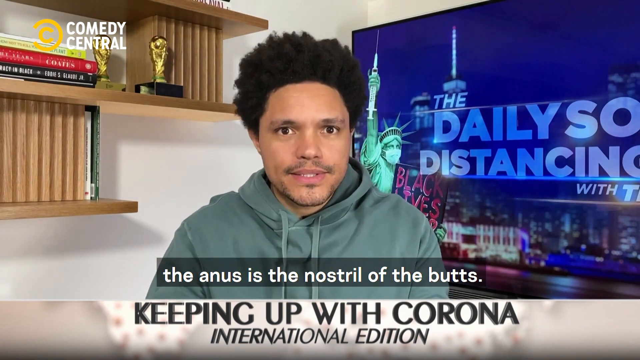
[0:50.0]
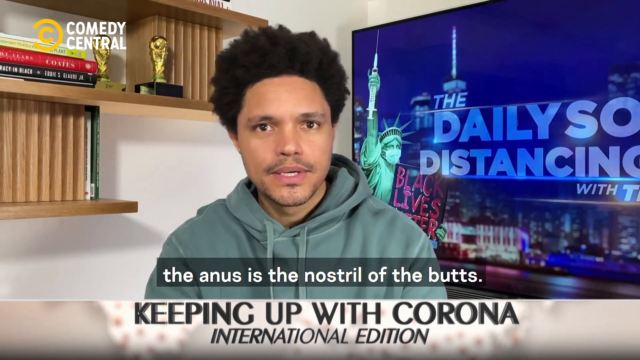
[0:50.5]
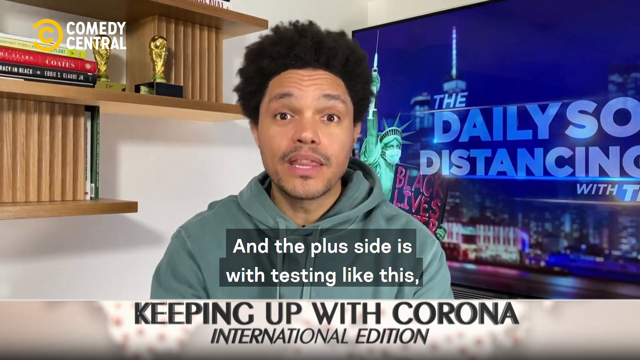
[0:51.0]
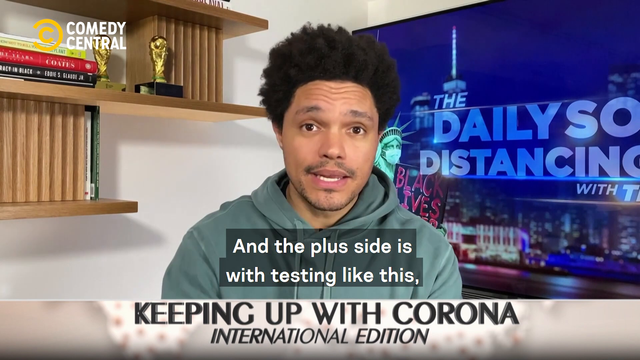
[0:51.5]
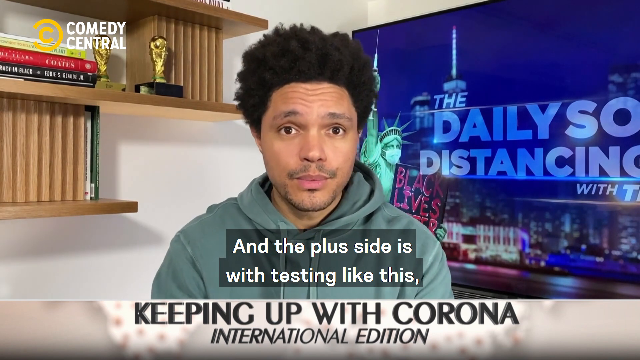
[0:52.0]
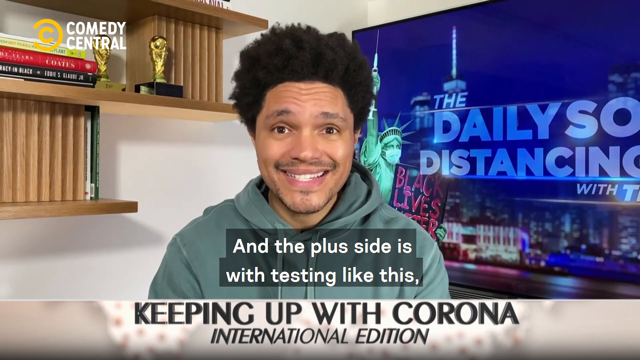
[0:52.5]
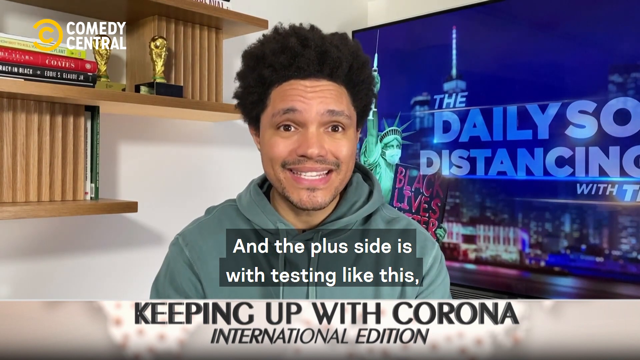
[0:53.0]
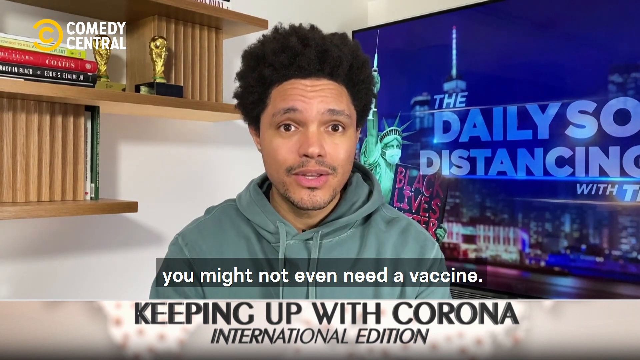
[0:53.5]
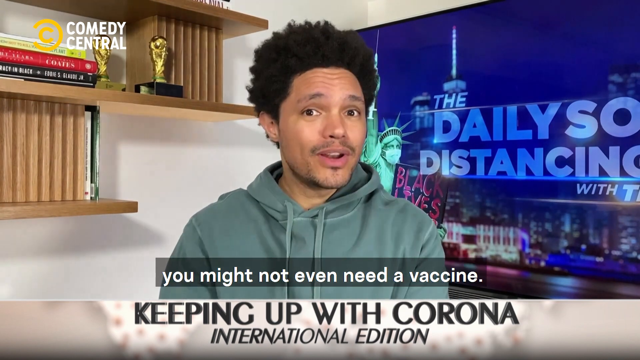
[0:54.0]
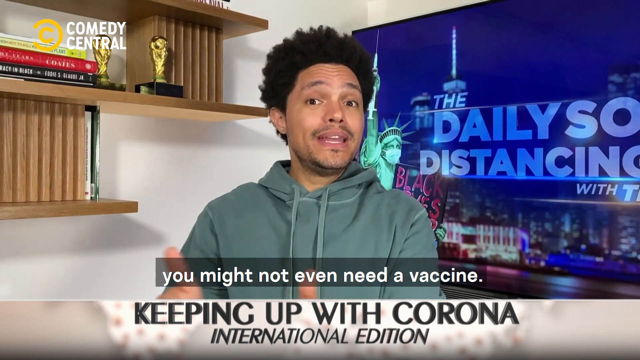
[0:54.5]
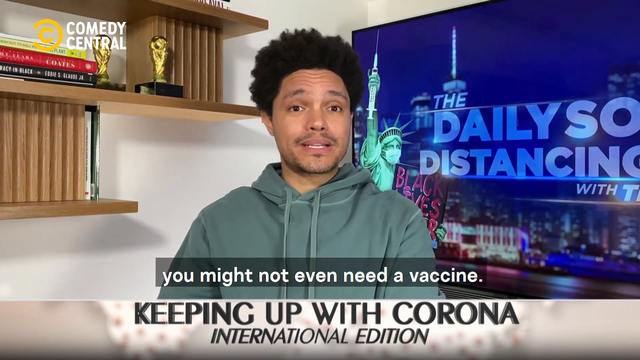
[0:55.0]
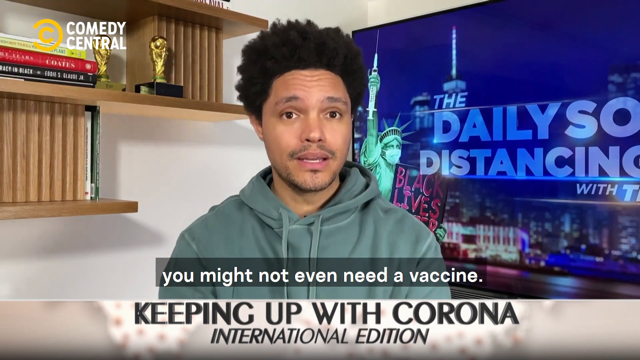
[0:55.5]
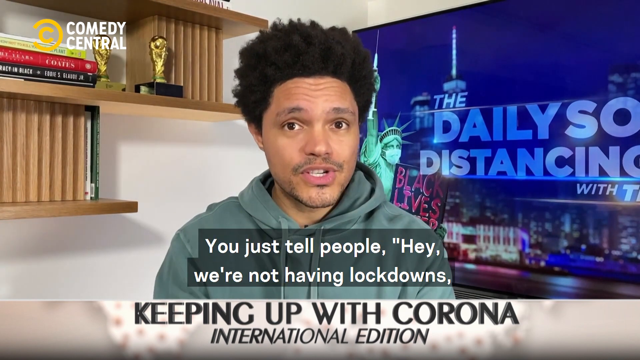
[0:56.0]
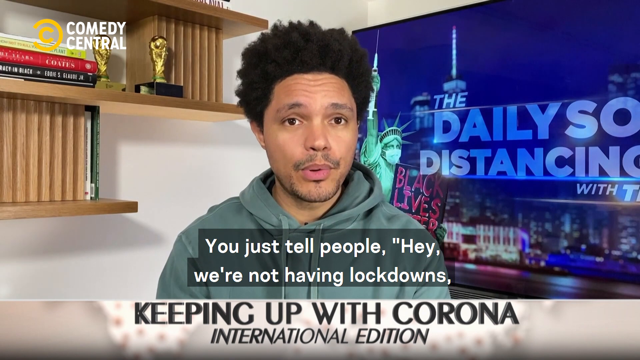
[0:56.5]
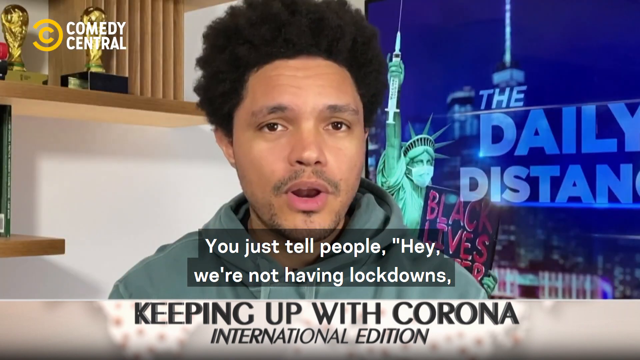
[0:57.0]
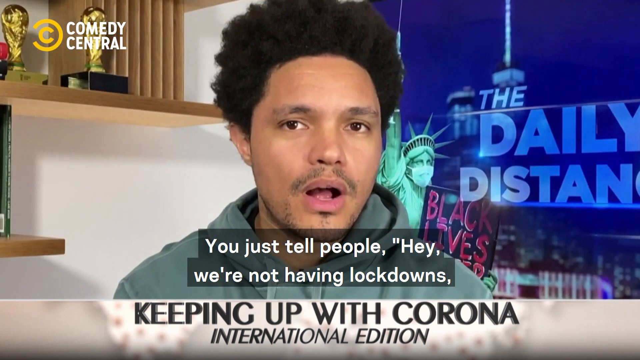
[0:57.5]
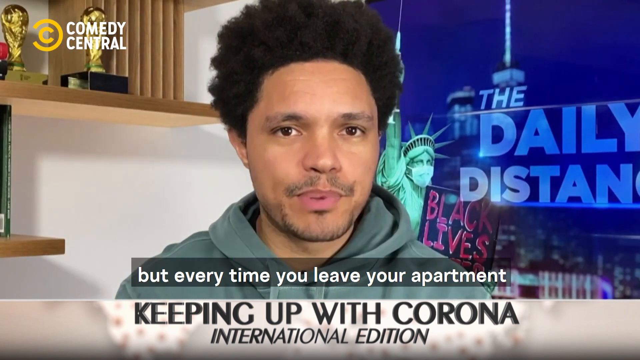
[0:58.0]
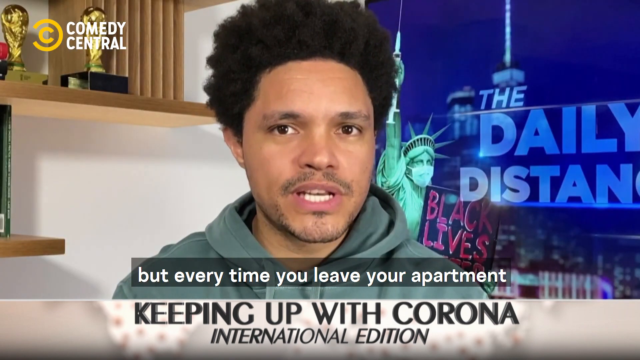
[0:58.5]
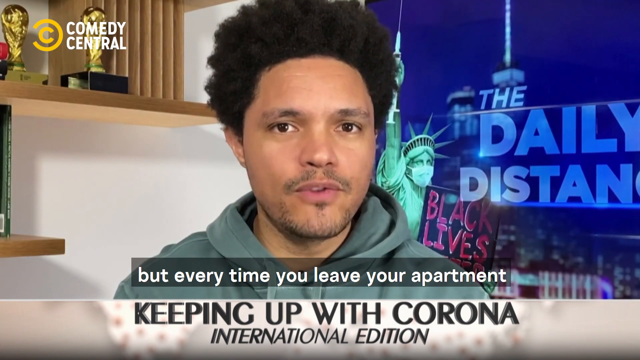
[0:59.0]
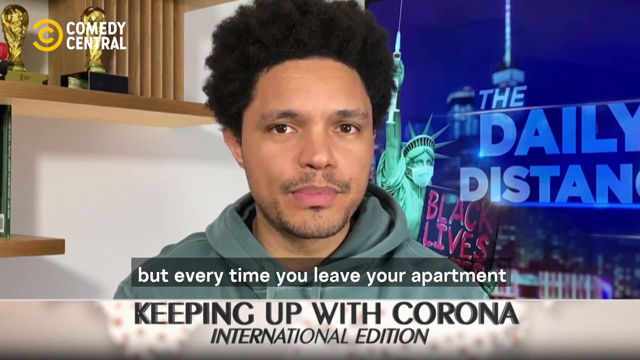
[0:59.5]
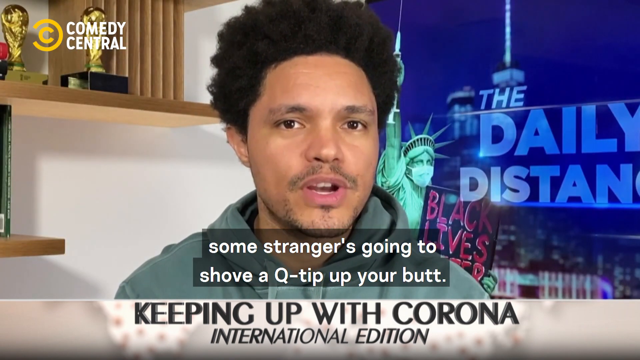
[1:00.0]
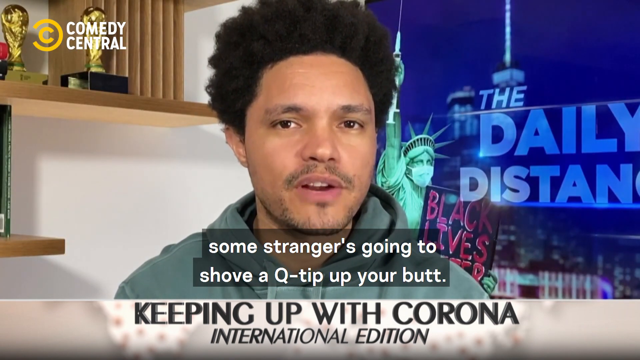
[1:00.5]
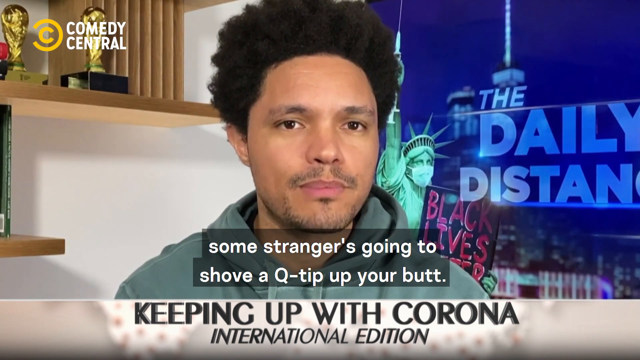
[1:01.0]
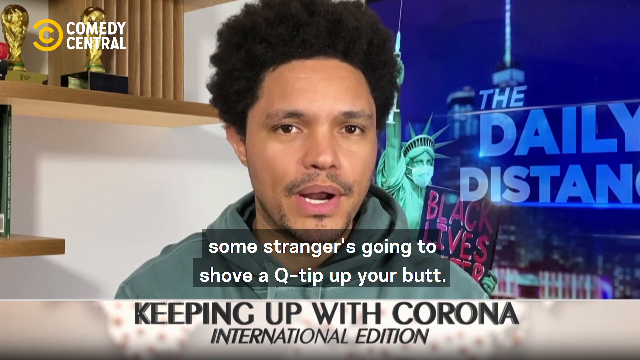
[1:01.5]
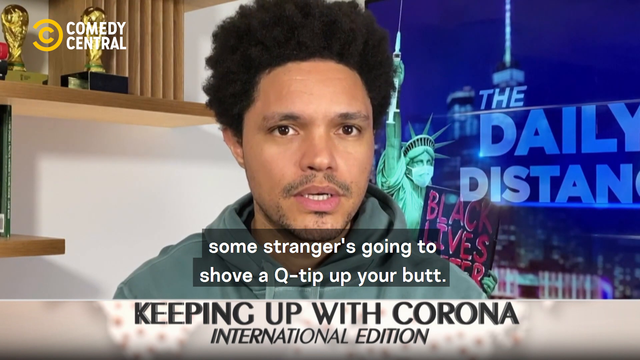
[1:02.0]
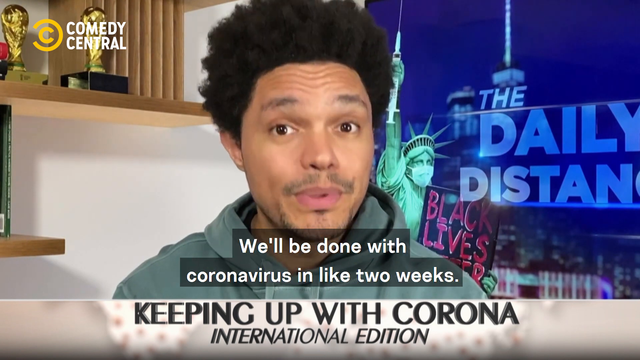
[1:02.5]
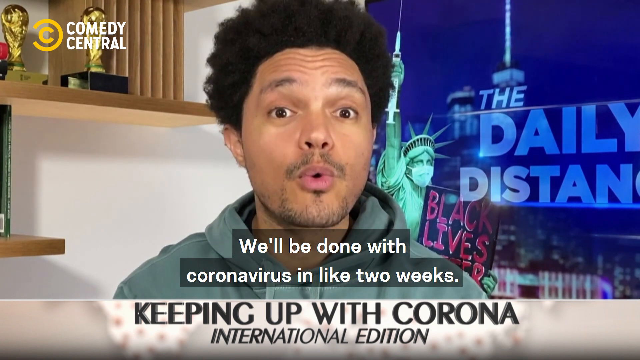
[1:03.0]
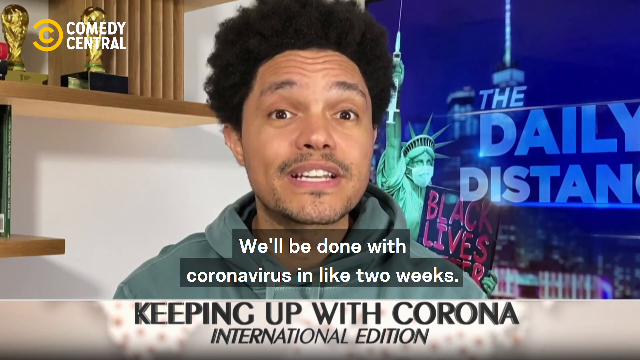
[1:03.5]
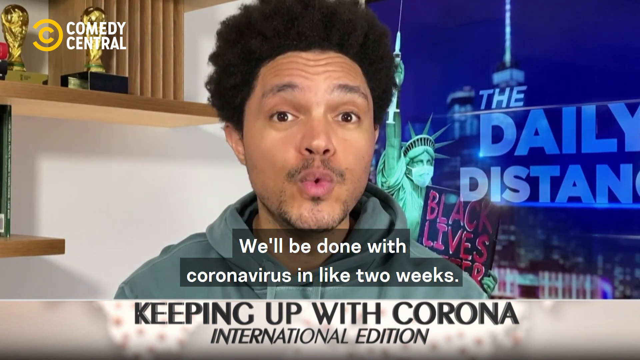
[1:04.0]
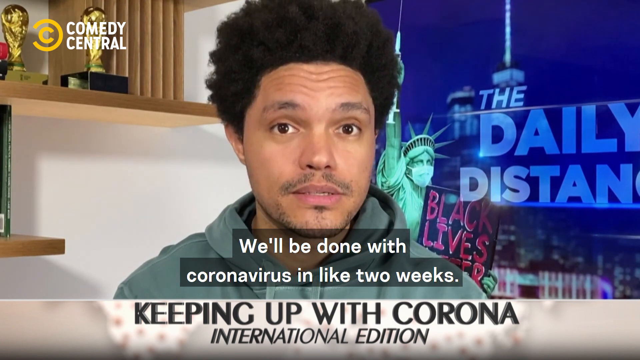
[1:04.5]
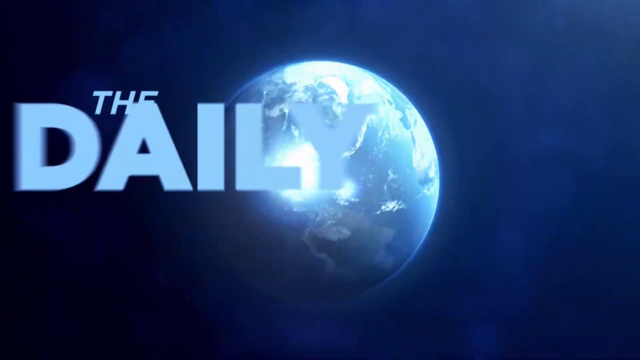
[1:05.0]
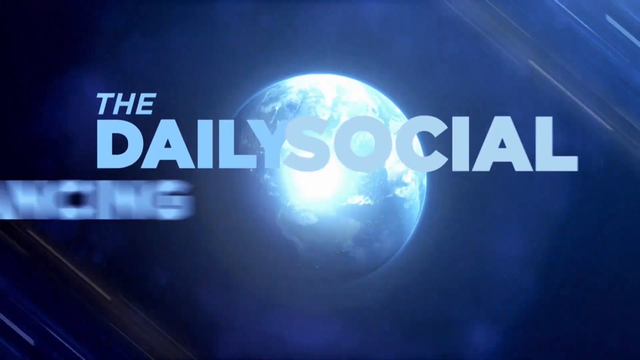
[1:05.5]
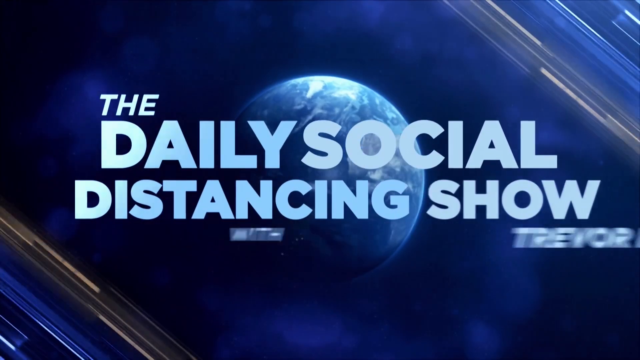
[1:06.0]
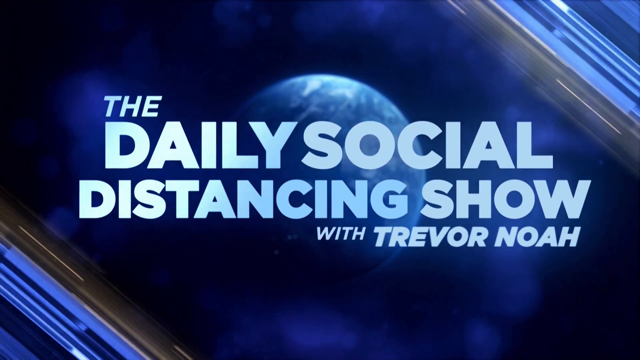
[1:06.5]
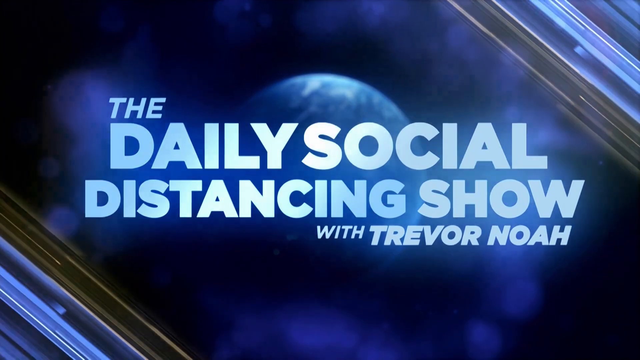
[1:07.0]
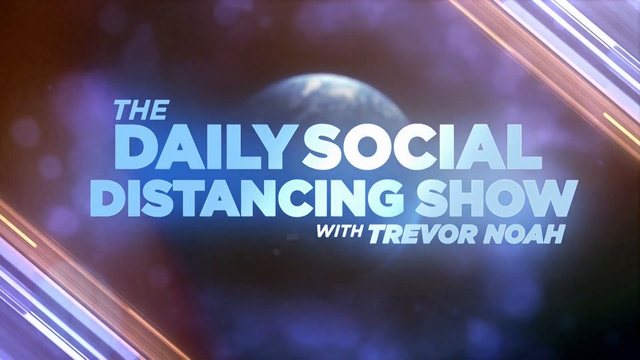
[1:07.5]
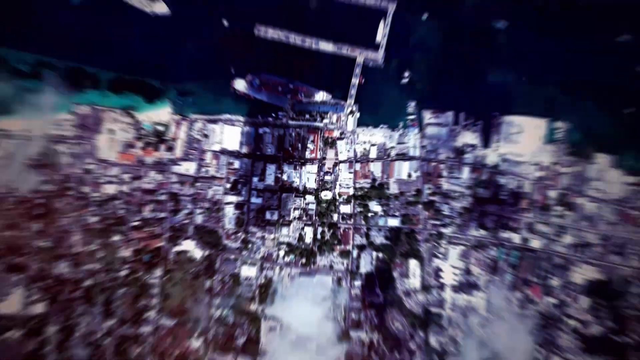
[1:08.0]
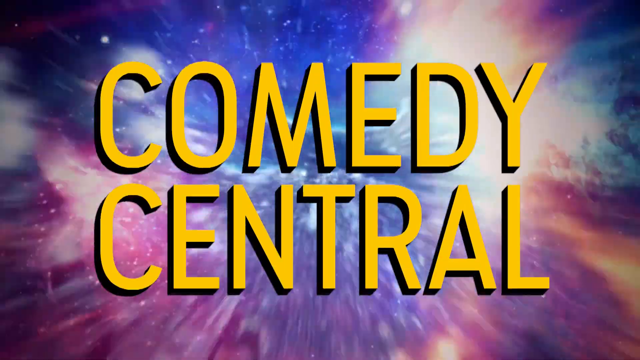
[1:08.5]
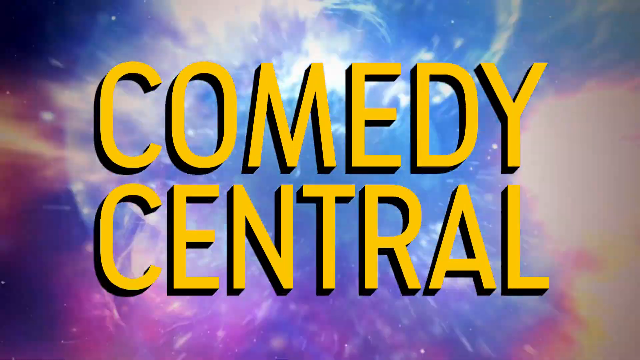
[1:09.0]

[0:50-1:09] Trevor Noah is still on screen, with something like a TV behind him showing "The Daily" and "distancing with Trevor Noah," what looks like a New York City landscape, and the Statue of Liberty wearing a mask and holding a Black Lives Matter sign. Behind him are open shelves with some books and an award he won. He wears a green hoodie, and a title below him reads "keeping up with the virus." He says, "And the plus side is with testing like this you might not even need a vaccine, you just tell people hey, we're not leaving lockdowns, but every time you leave your apartment some stranger's going to shove a q-tip up your butt." He then goes away, and the intro or exit for his show comes on, showing the earth and then a blue background with the text "The daily social distancing show with Trevor Noah."